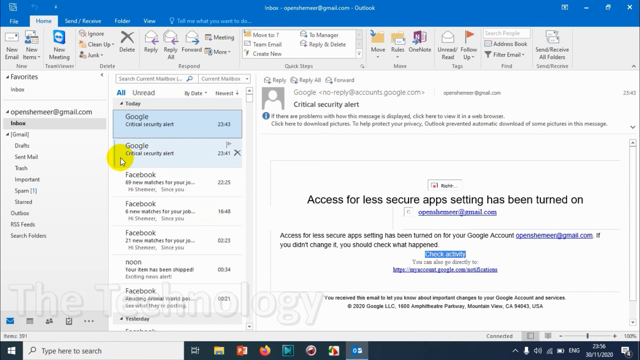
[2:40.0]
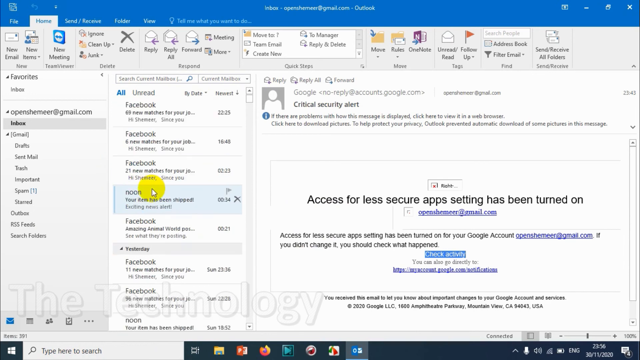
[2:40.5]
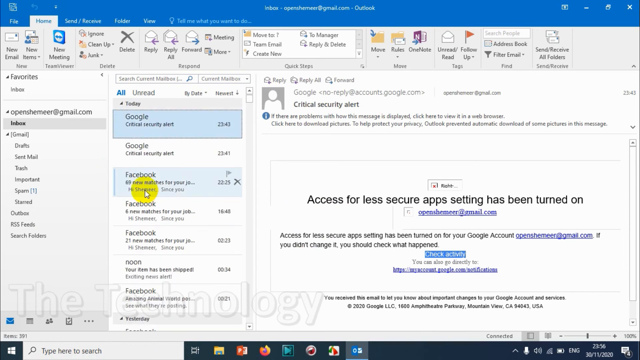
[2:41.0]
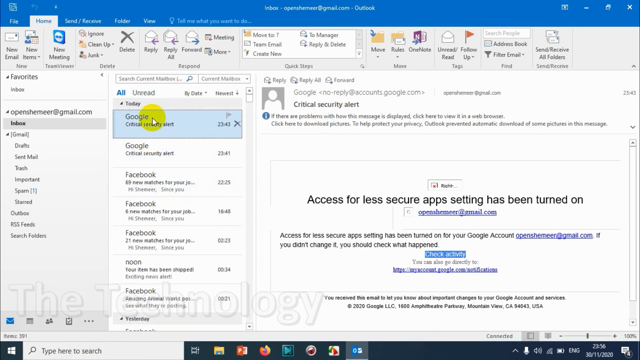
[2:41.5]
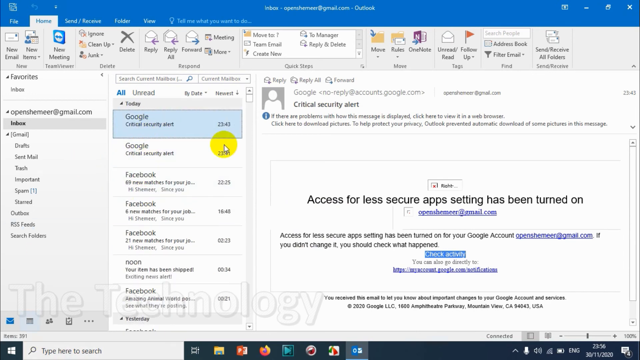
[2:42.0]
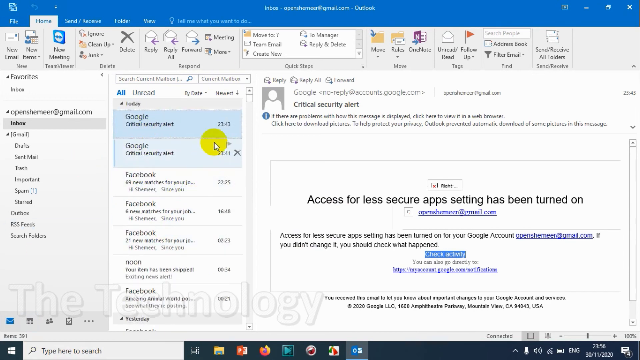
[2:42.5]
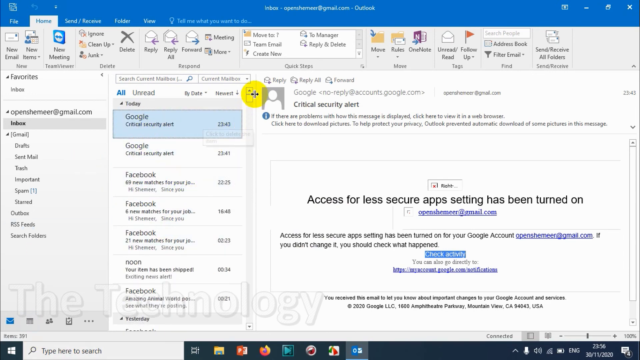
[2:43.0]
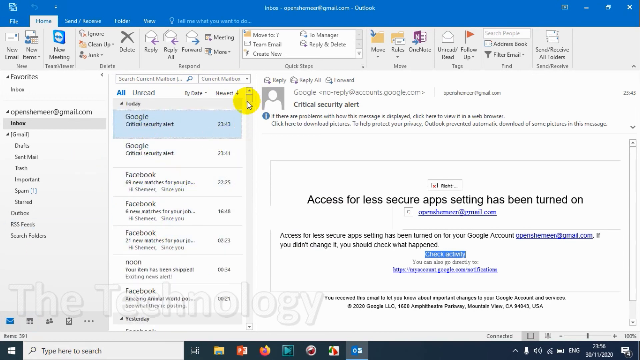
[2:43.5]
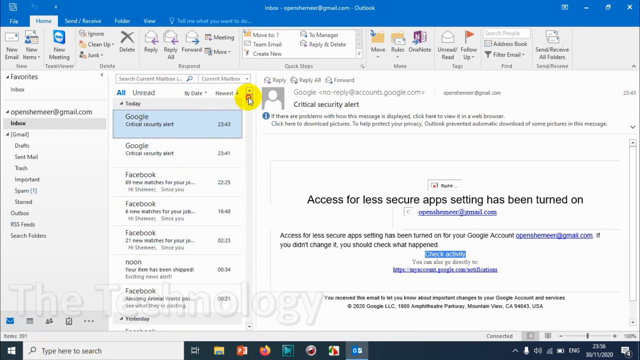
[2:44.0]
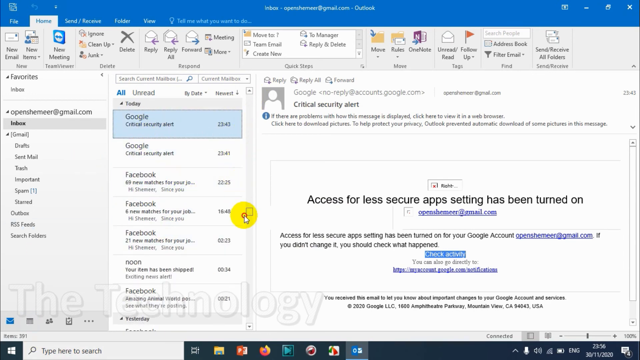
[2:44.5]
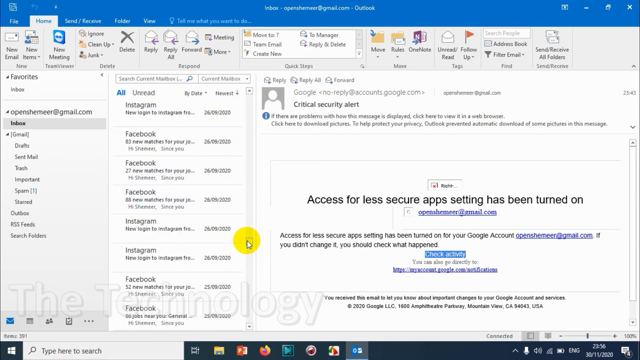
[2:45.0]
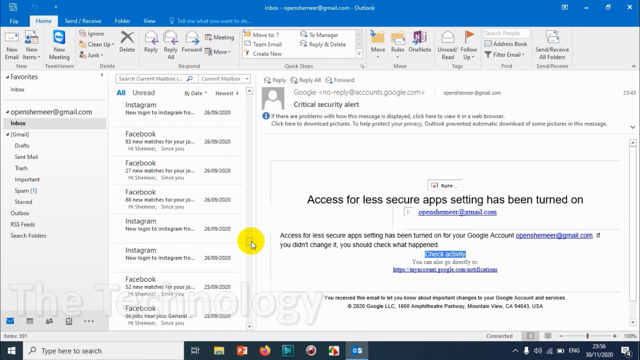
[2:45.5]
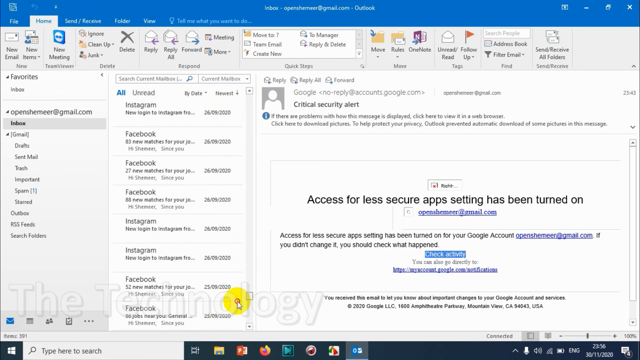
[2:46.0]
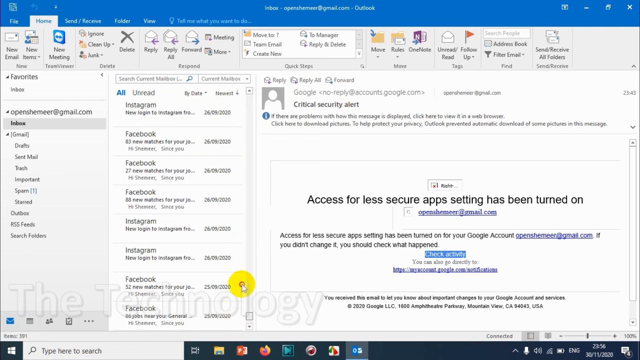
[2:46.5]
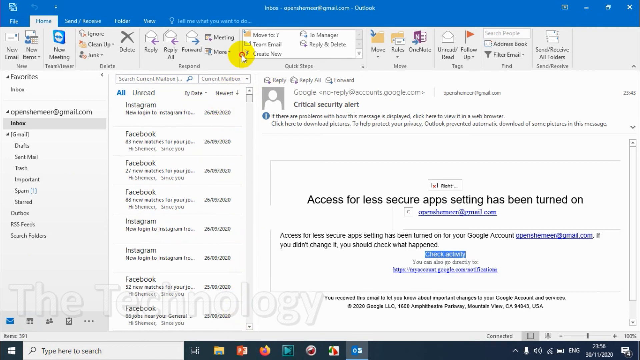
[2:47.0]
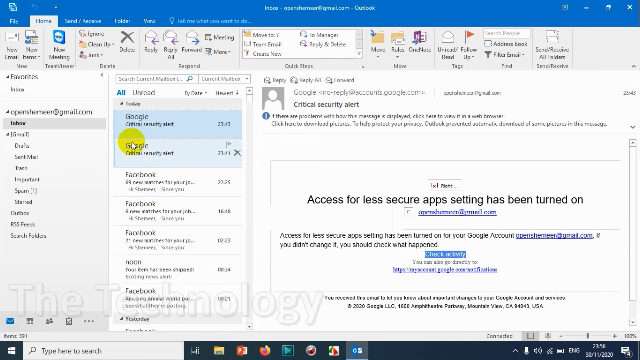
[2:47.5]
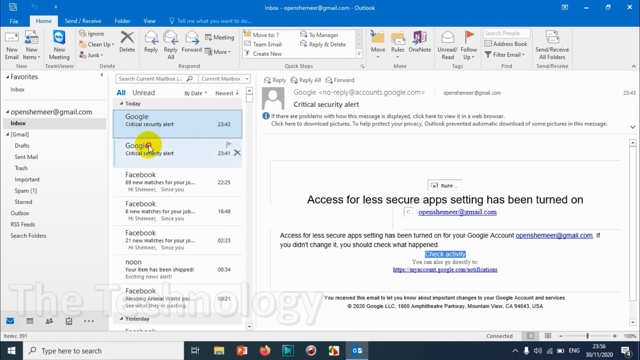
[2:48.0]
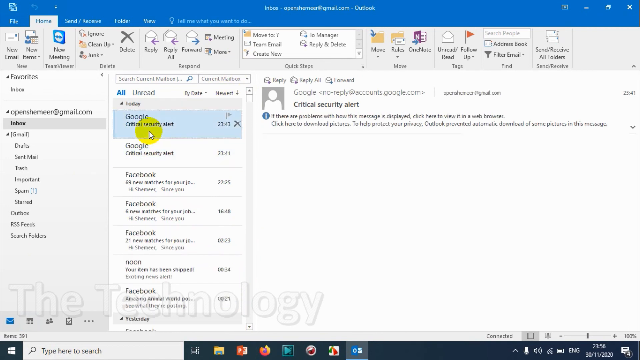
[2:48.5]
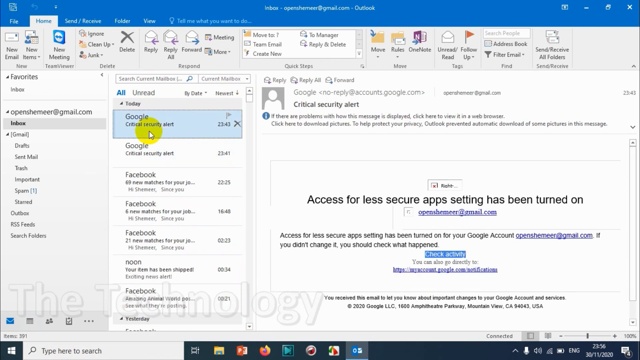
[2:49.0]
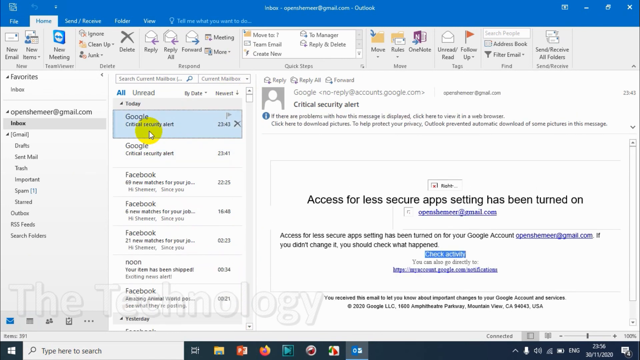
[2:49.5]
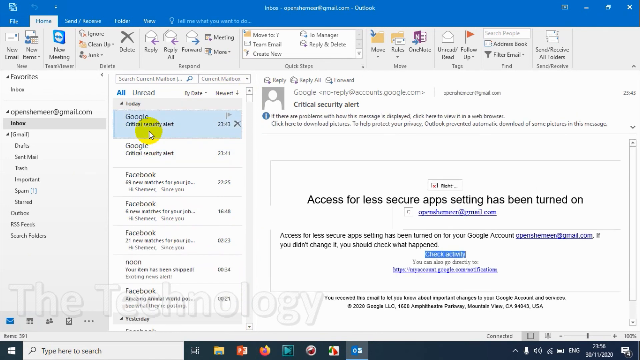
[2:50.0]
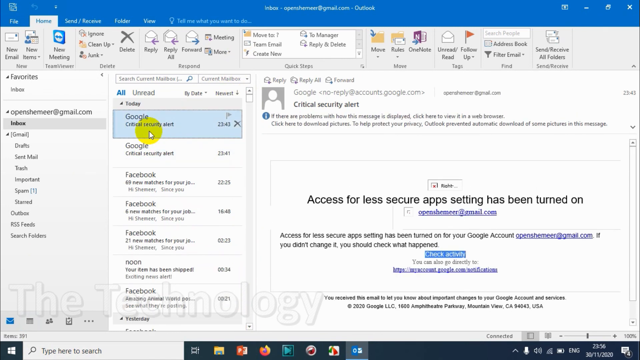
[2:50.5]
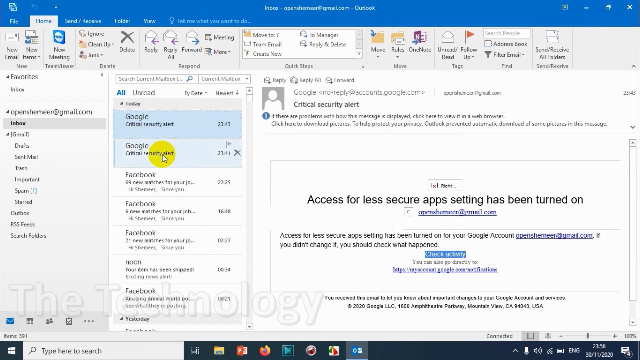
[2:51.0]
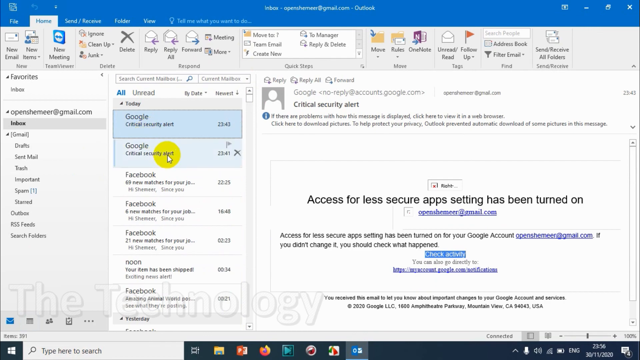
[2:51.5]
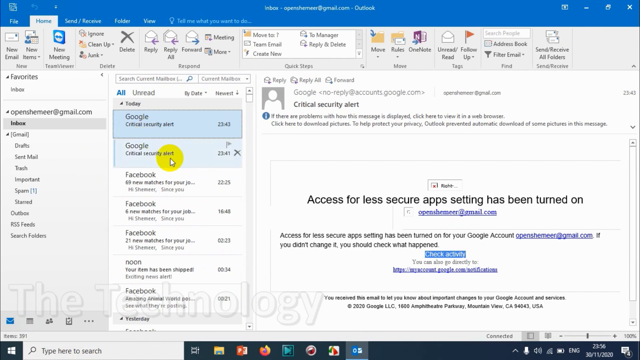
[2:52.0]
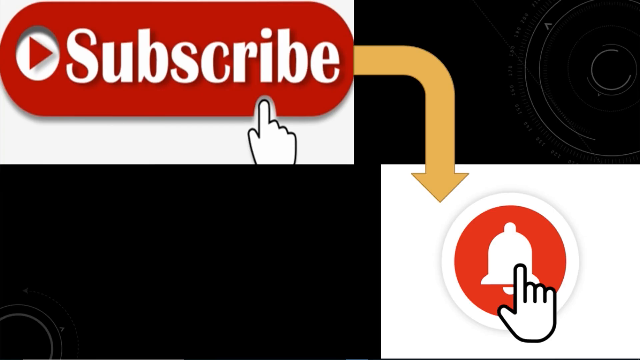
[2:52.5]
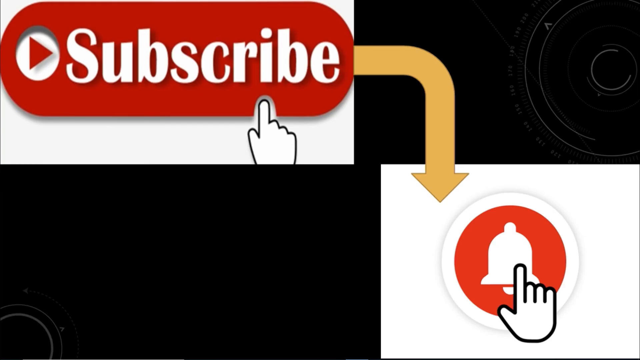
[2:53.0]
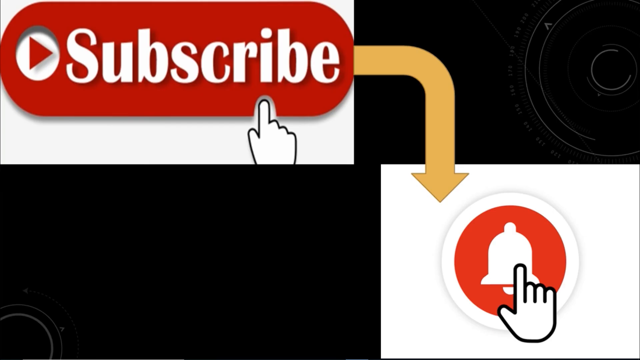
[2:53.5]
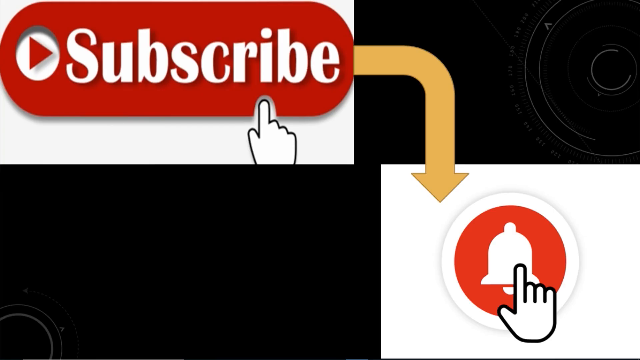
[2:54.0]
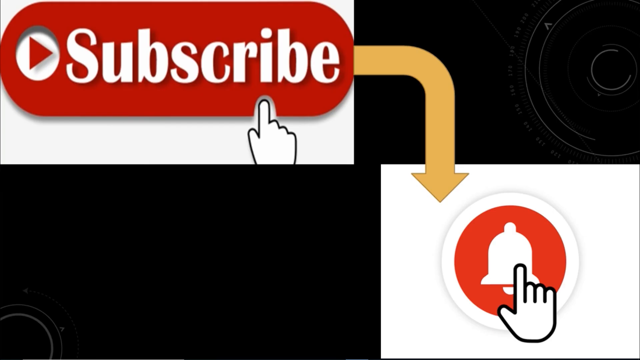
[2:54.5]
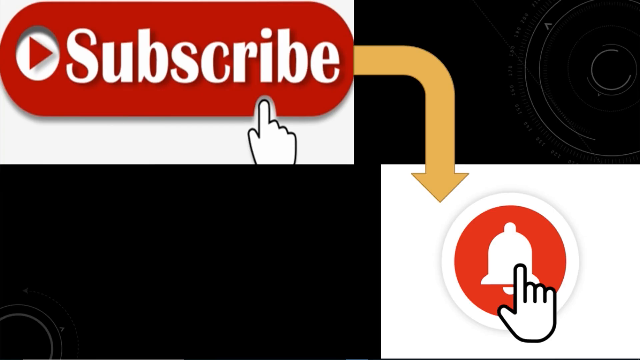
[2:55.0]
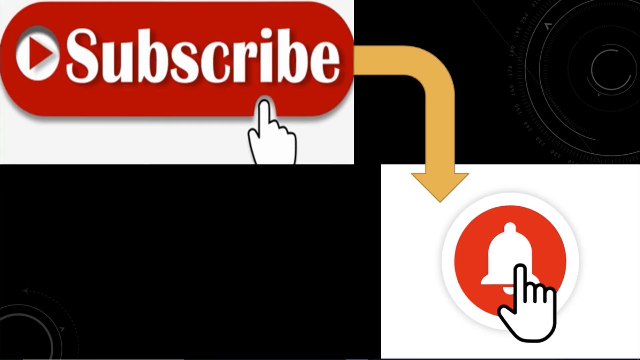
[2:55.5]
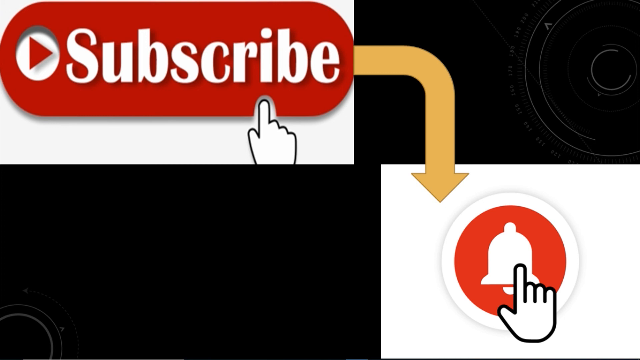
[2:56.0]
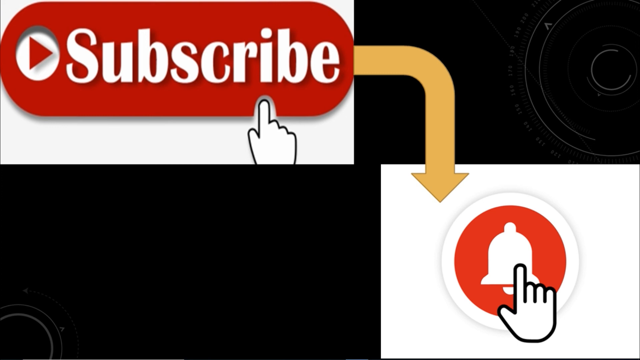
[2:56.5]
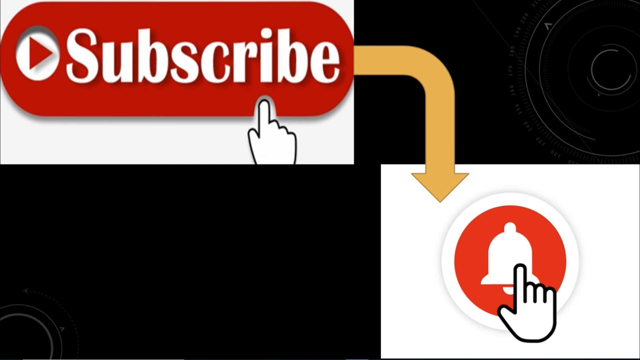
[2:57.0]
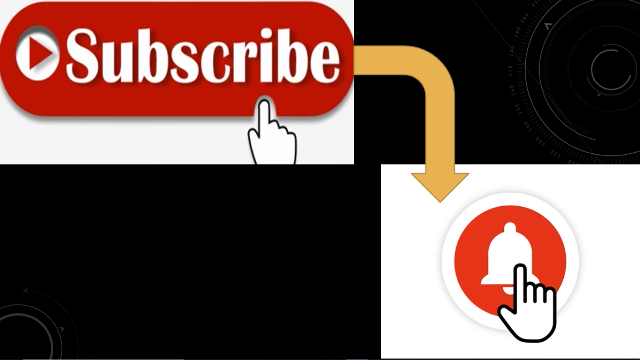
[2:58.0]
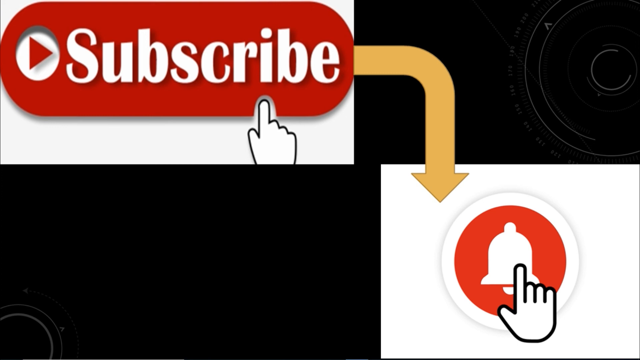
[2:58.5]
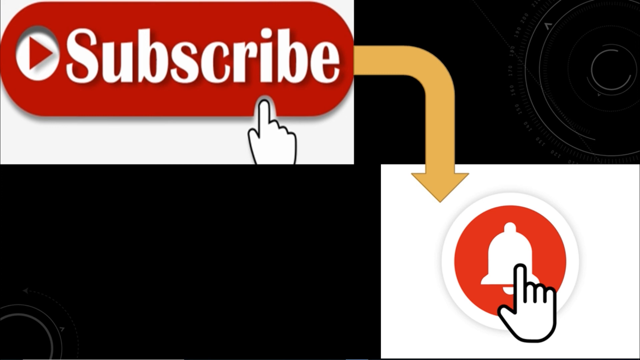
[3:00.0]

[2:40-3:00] The page appears to be a Microsoft Outlook email account. A blue strip at the top allows selecting where to go, and the home page is selected, highlighted in gray. Just under the blue strip are several options, such as creating a new email or printing. Below that are three columns. The left column lists email categories: inbox, star, drafts, sent mail, and trash. To its right is a listing of the emails in the account, with Google selected in light blue. A yellow line comes down to the second email, which is highlighted in a very, very light blue. The pointer, represented by a yellow circle, hovers between the second email and the unmarked third email. On the far right is a preview of the first email.